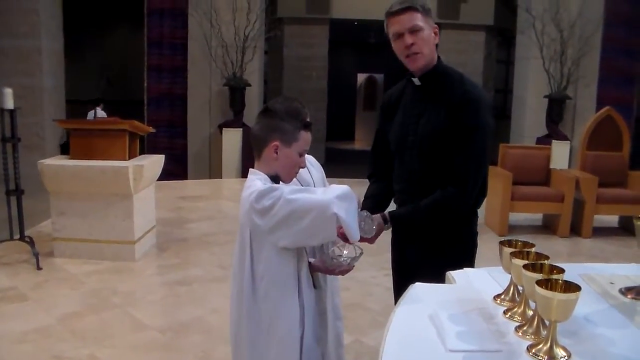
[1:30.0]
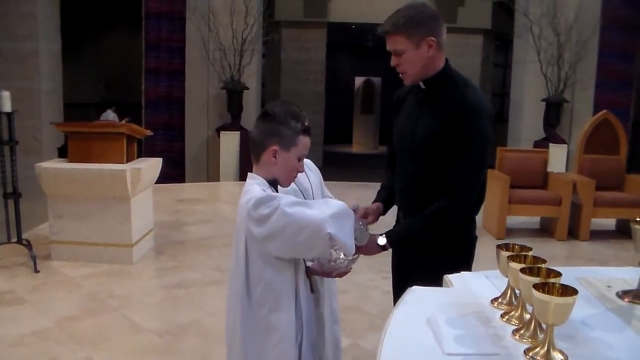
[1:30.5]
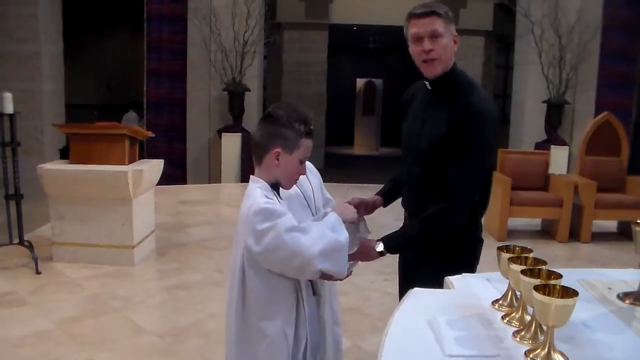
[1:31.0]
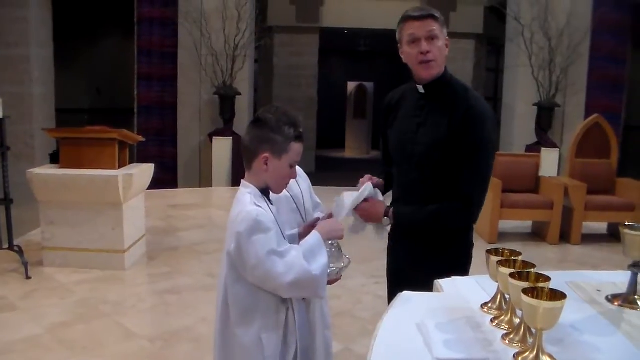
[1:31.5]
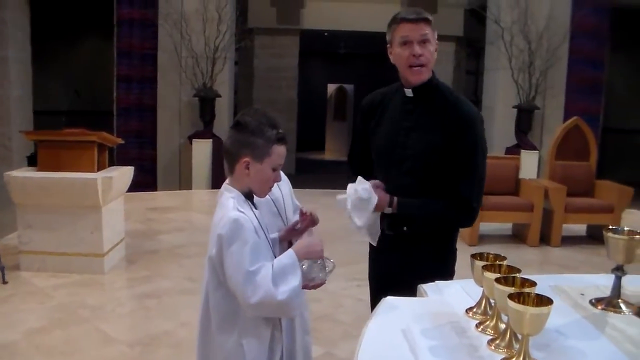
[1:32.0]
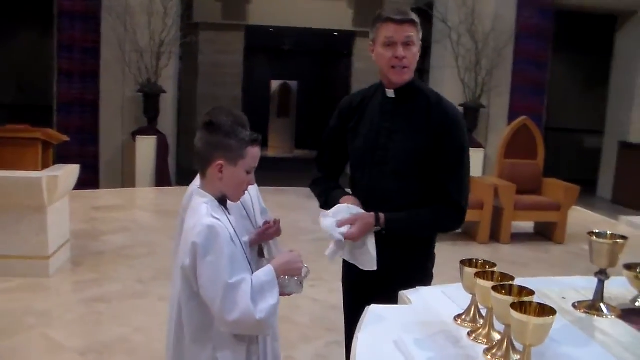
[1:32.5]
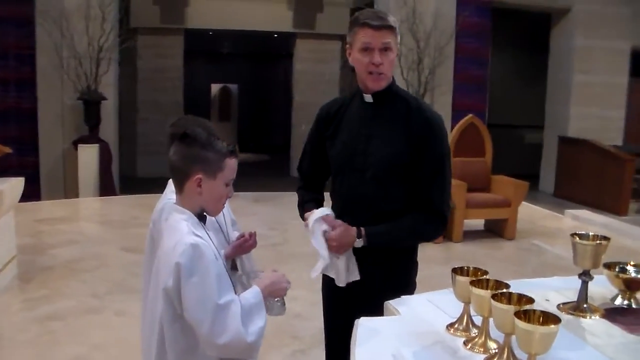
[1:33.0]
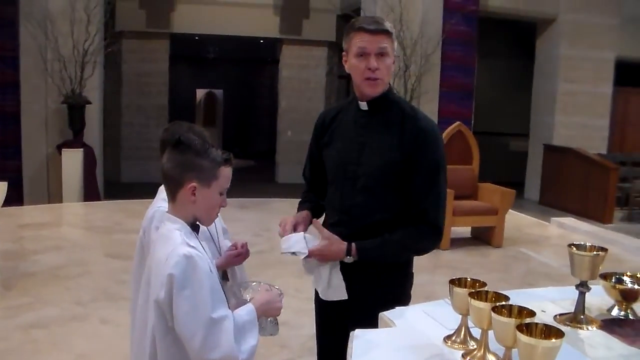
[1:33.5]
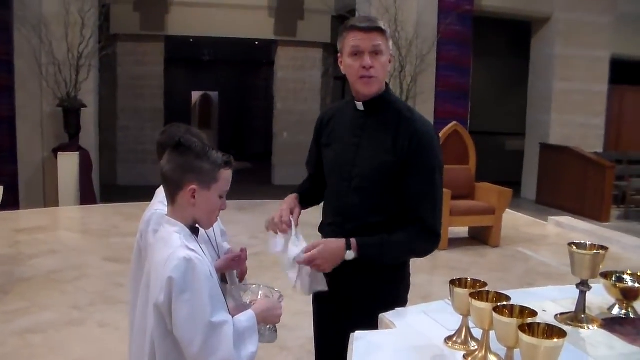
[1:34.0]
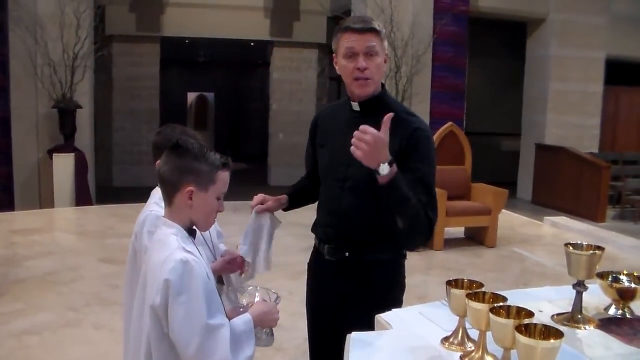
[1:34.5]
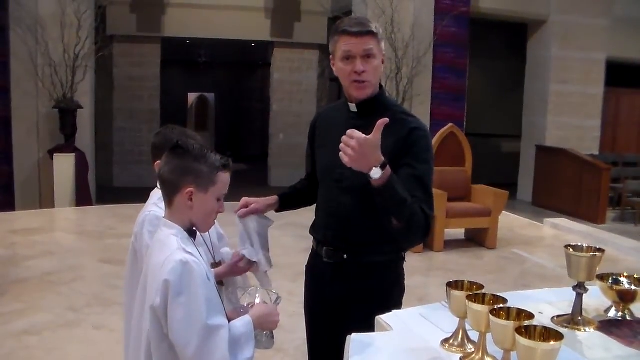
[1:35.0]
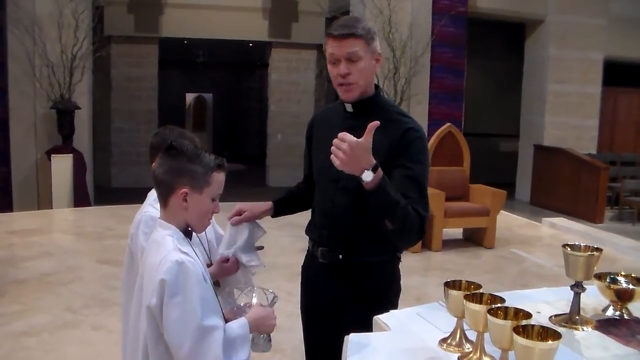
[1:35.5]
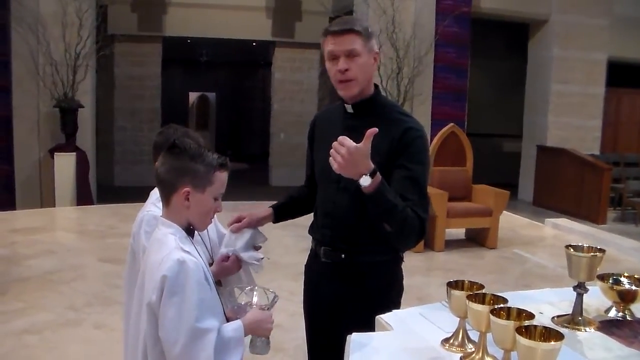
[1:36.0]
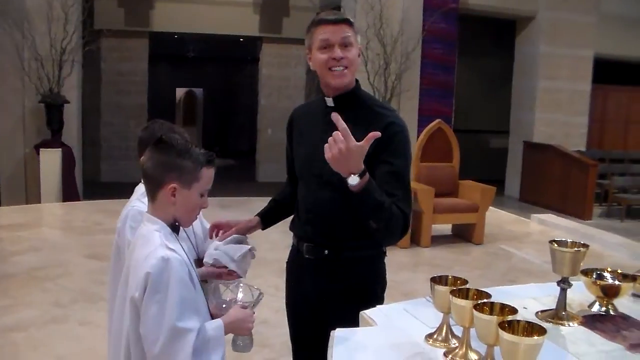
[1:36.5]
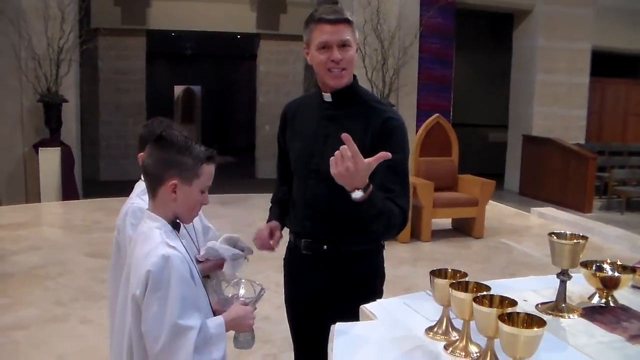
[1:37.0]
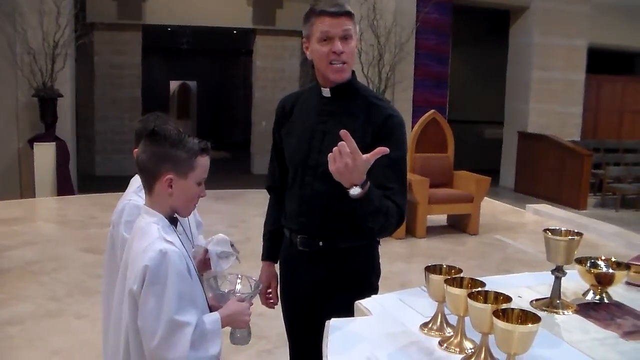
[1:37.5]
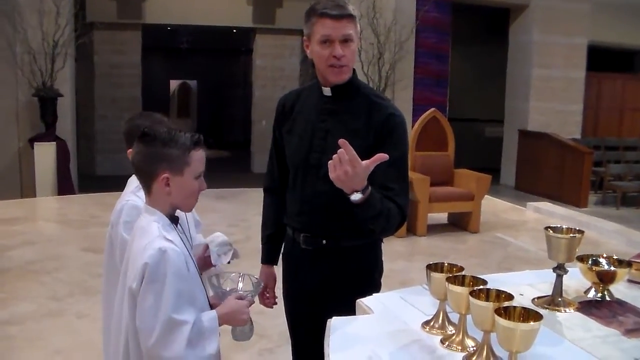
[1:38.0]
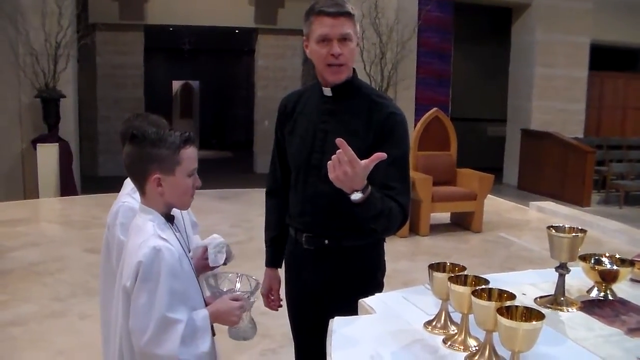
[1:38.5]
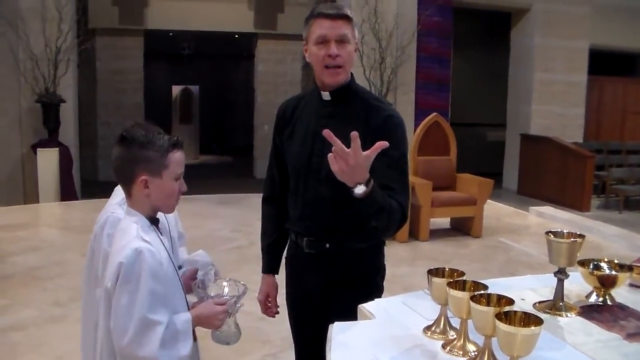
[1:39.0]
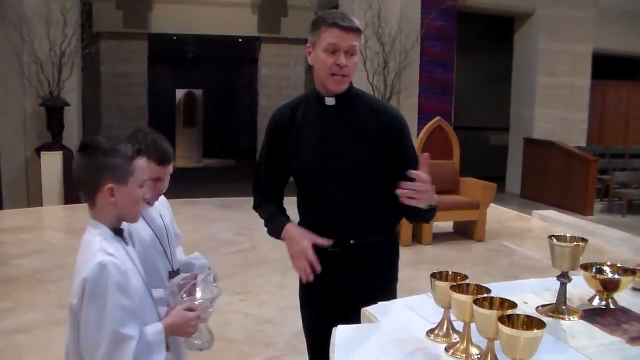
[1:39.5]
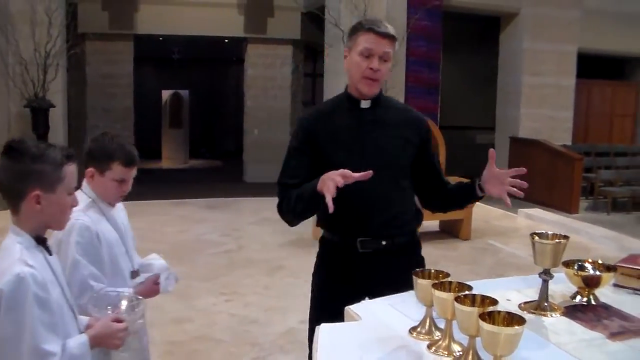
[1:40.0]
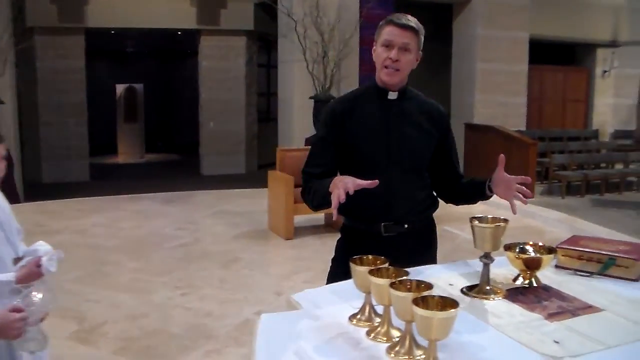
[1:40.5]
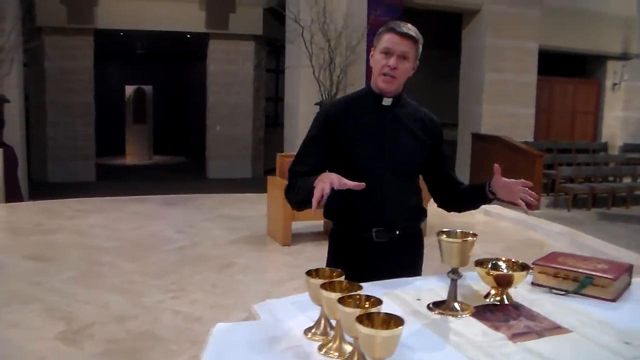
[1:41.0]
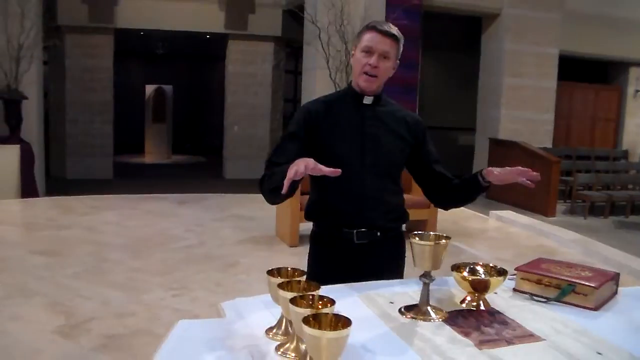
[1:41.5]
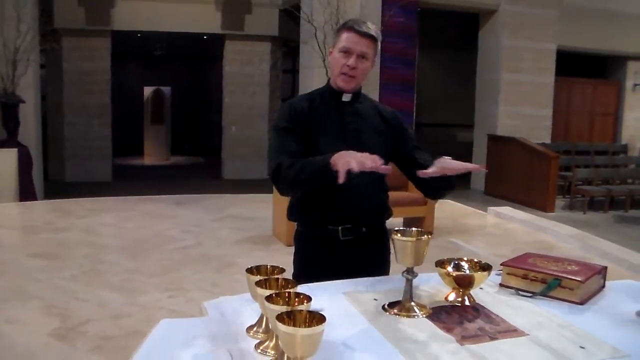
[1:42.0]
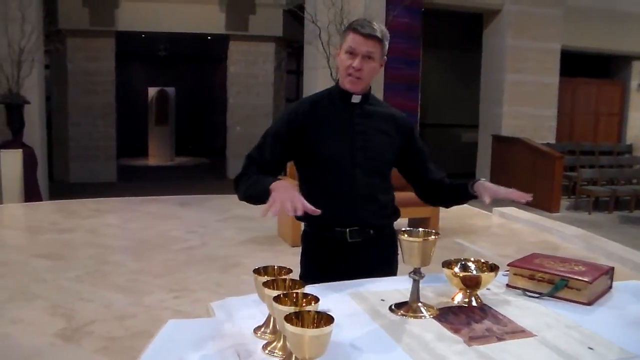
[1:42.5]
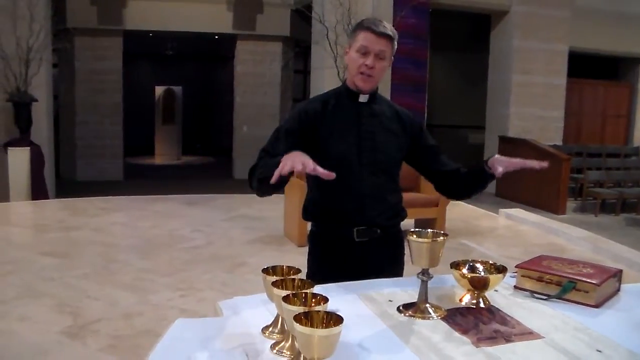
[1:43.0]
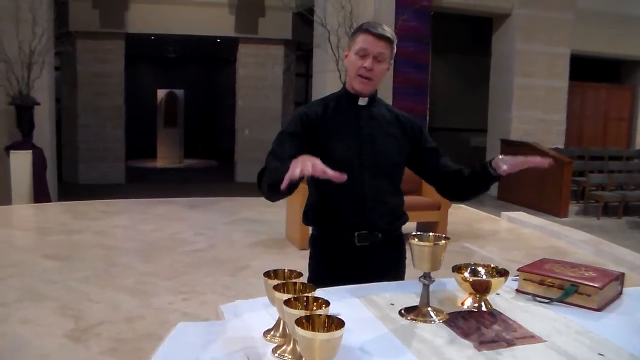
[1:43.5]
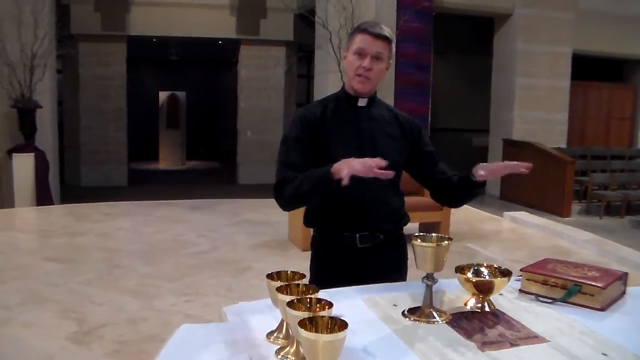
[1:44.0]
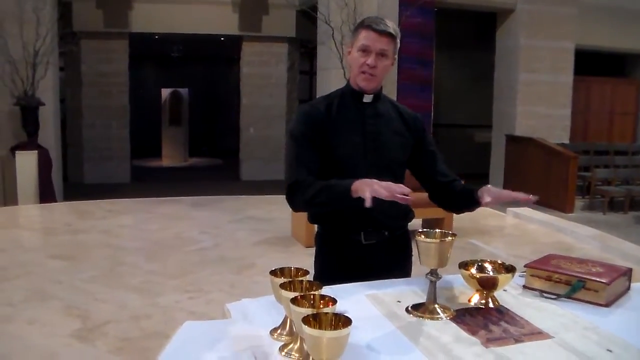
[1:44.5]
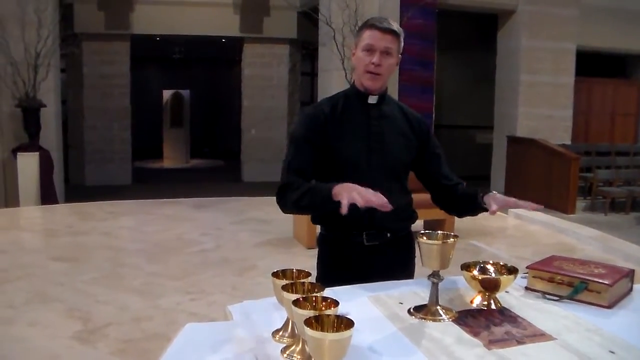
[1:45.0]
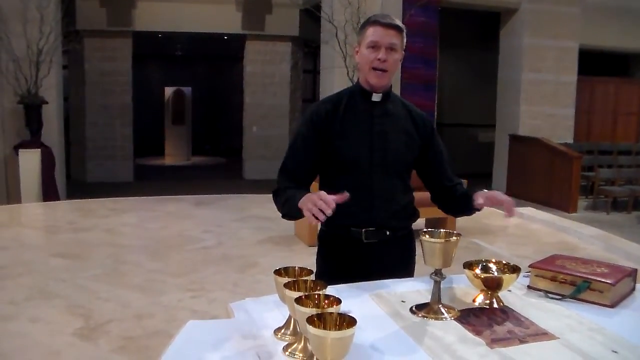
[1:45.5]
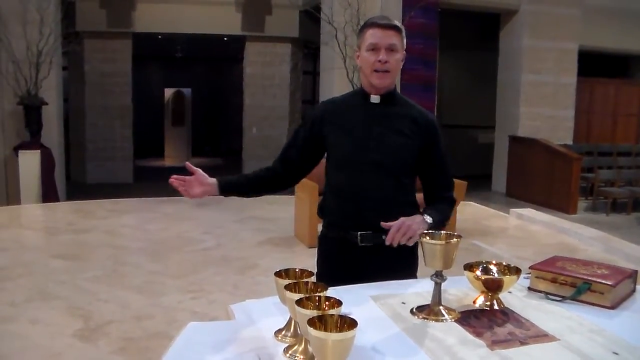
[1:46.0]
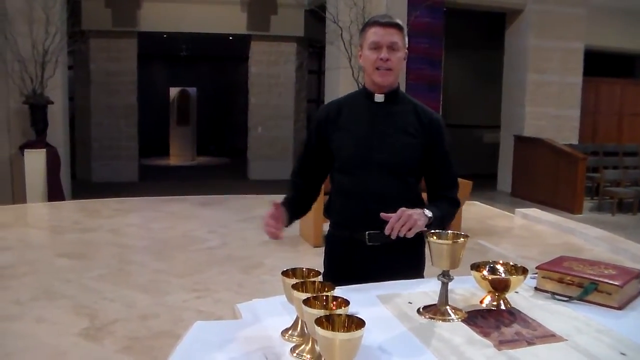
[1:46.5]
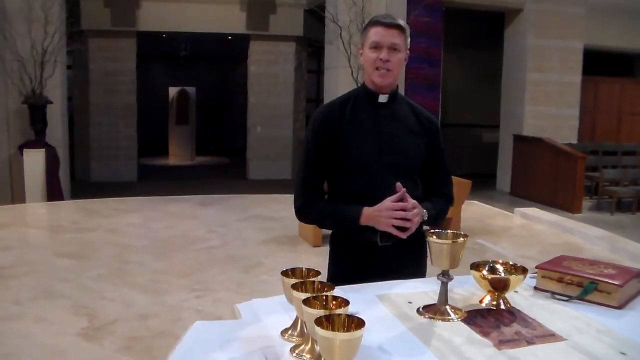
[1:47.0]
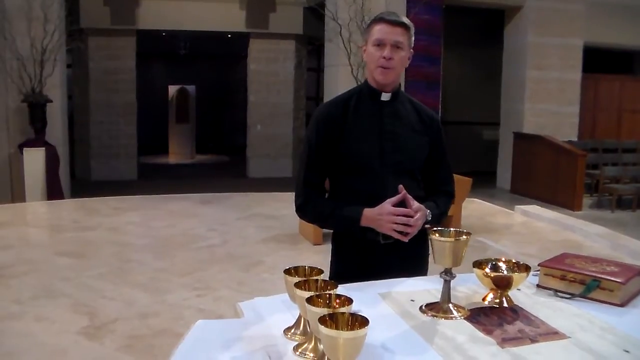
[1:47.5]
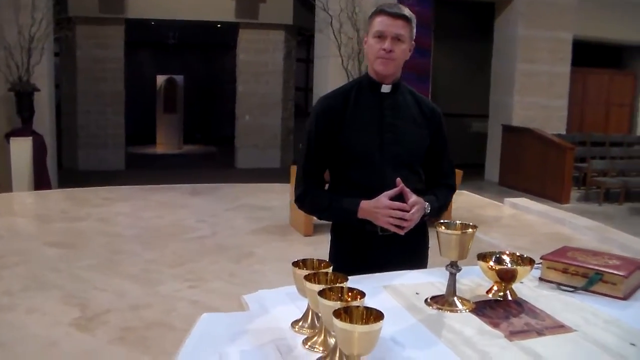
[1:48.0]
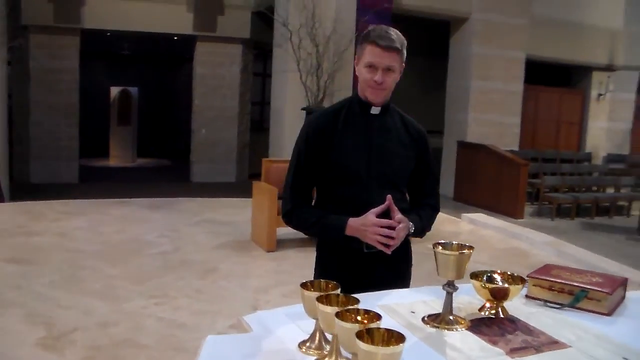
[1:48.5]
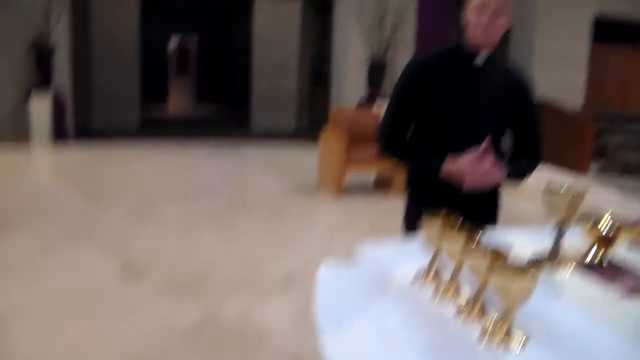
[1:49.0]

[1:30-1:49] The priest turns towards the camera and talks while taking a towel from one of the children furthest from the camera and drying his hands with it. He hands the towel back to one of the boys, counts one, two, three on his fingers, then turns and moves back towards the table. The two remaining children move off camera to the left, out of the shot. The priest gestures towards them both, looks at the camera and nods. He brings his hands up and gestures towards all the objects on the table, as if referring to all of these items, then gestures with his right hand towards the two children again. He nods, and the camera quickly pans down all the way to the floor; the floor, the priest and the table all blur until the video abruptly ends.